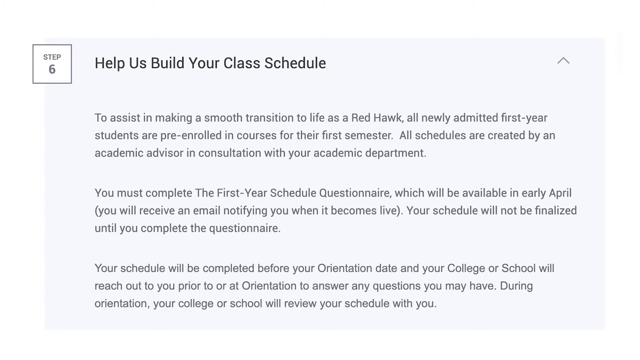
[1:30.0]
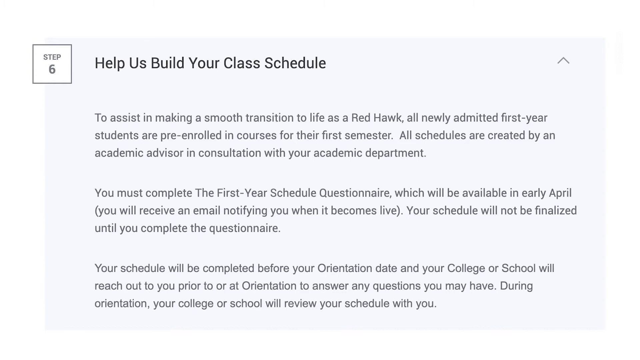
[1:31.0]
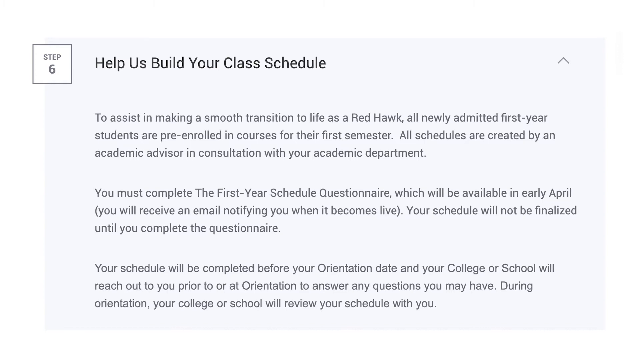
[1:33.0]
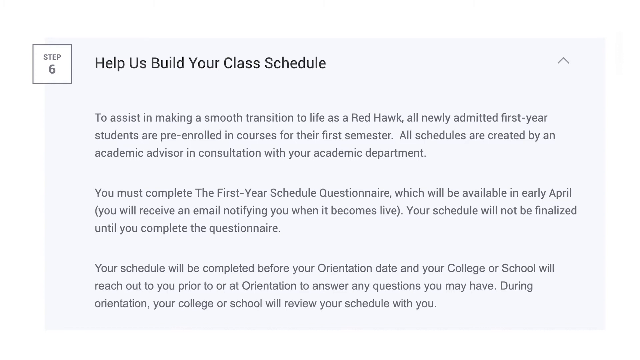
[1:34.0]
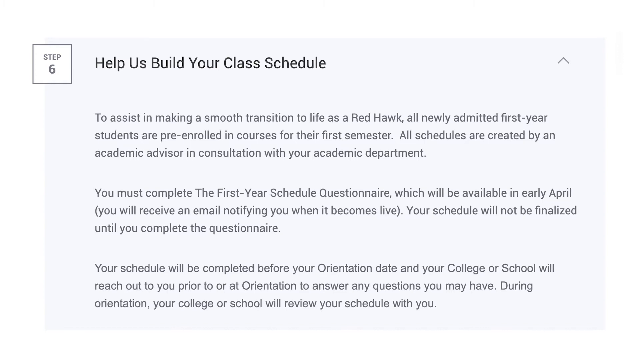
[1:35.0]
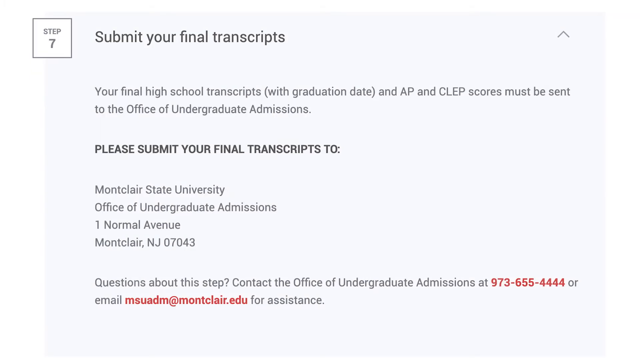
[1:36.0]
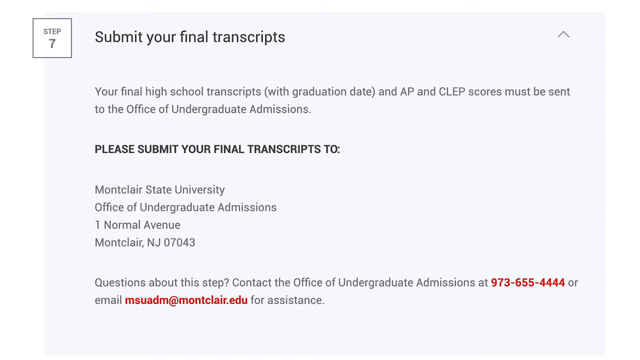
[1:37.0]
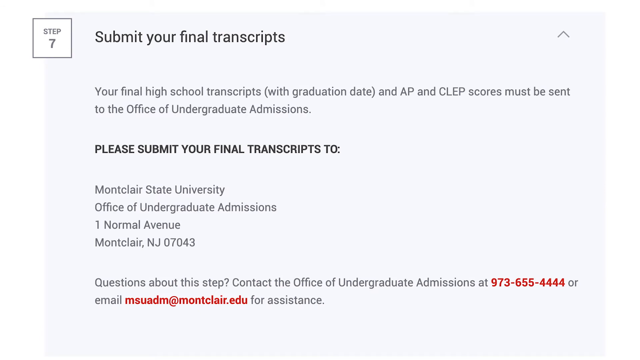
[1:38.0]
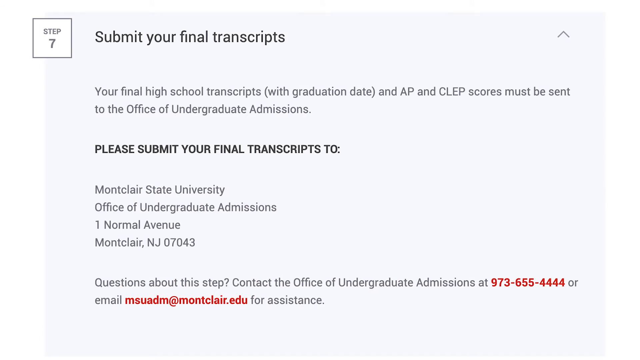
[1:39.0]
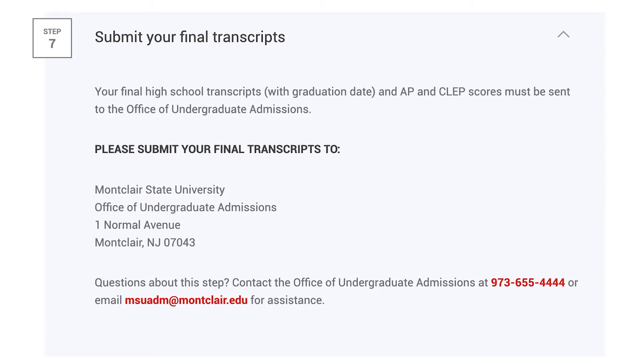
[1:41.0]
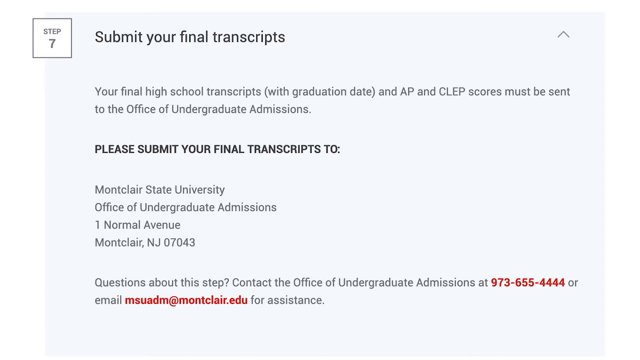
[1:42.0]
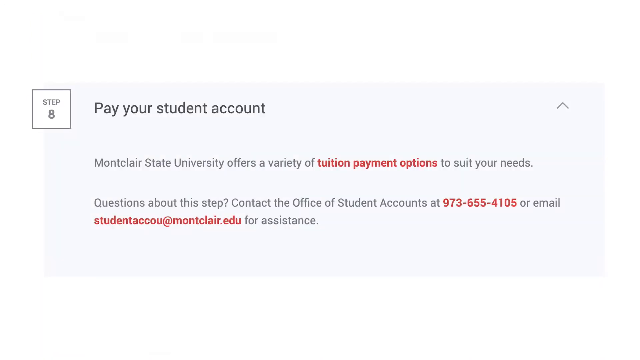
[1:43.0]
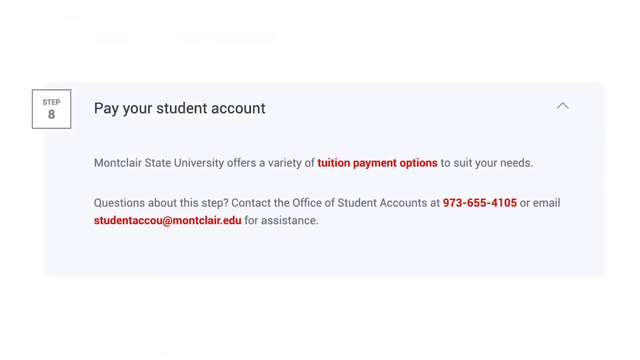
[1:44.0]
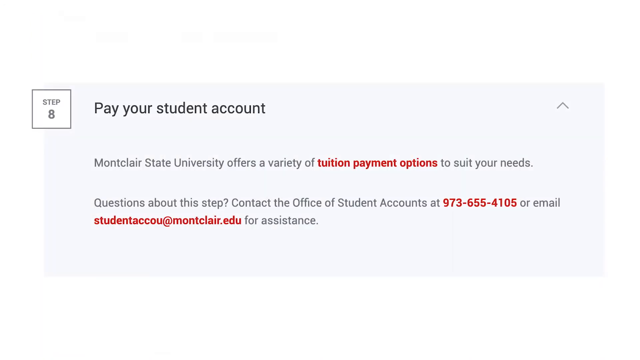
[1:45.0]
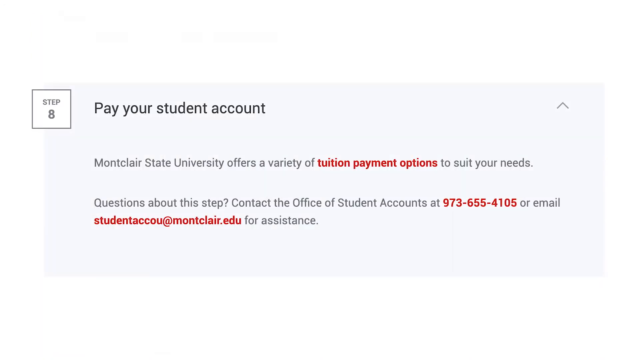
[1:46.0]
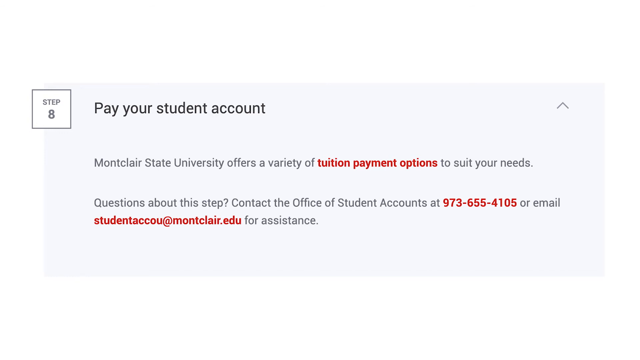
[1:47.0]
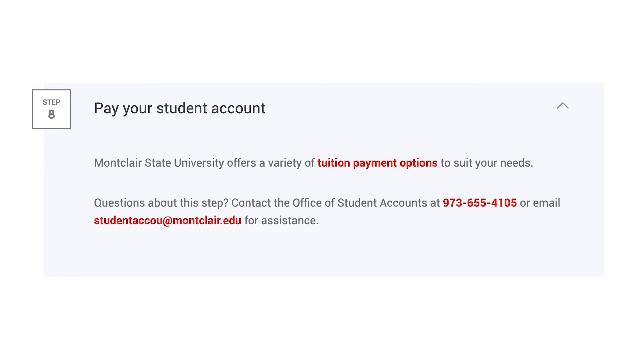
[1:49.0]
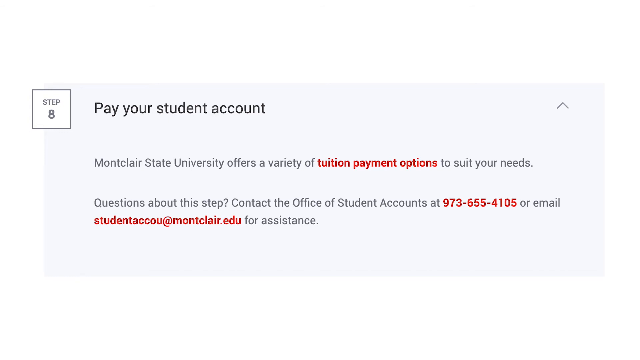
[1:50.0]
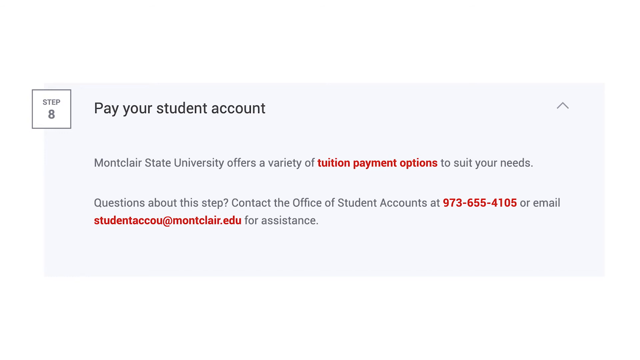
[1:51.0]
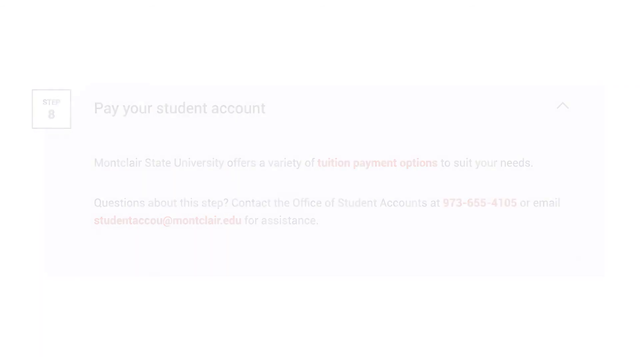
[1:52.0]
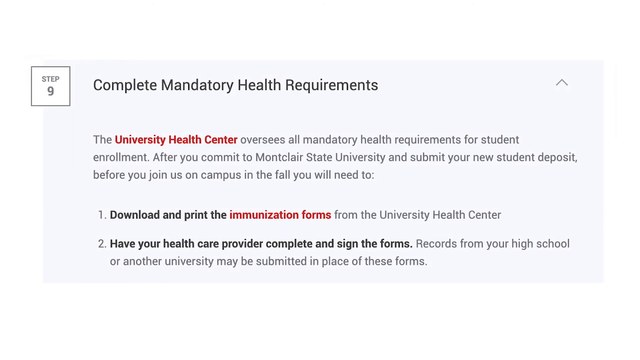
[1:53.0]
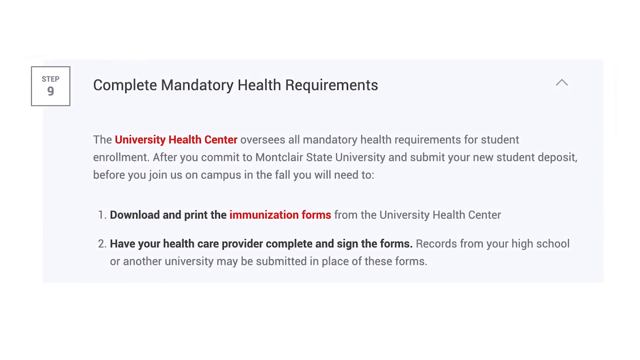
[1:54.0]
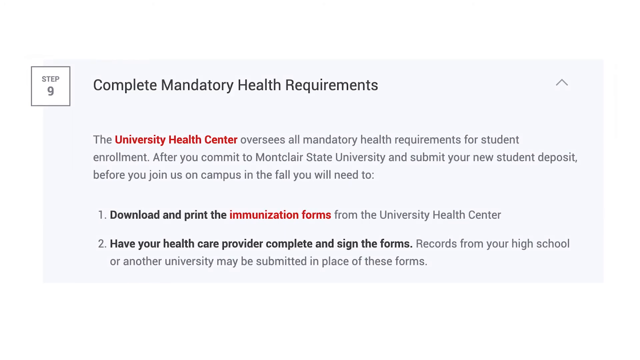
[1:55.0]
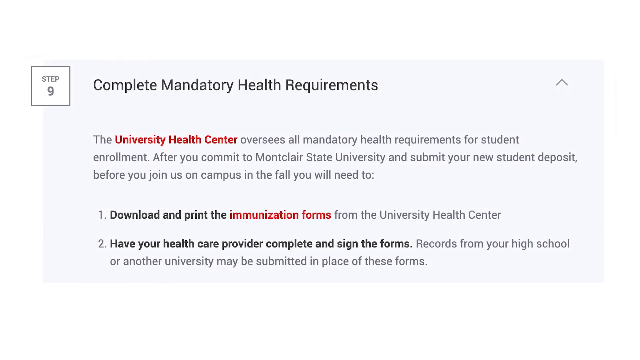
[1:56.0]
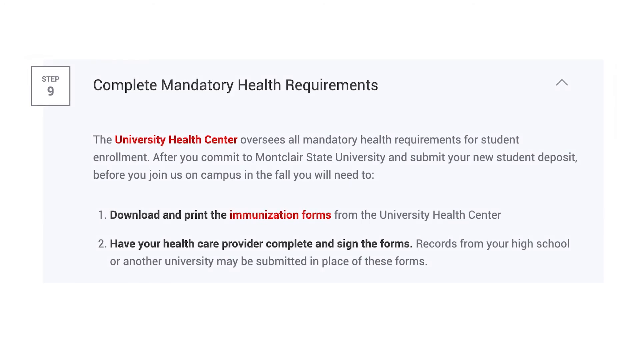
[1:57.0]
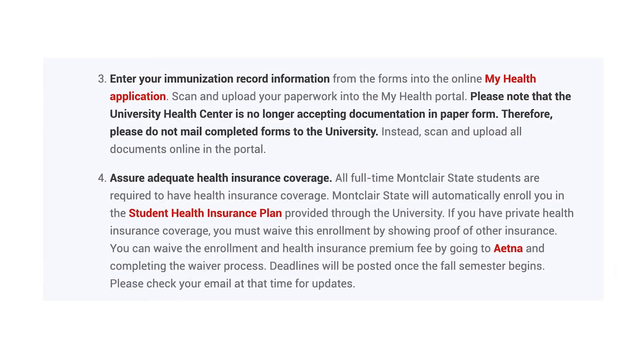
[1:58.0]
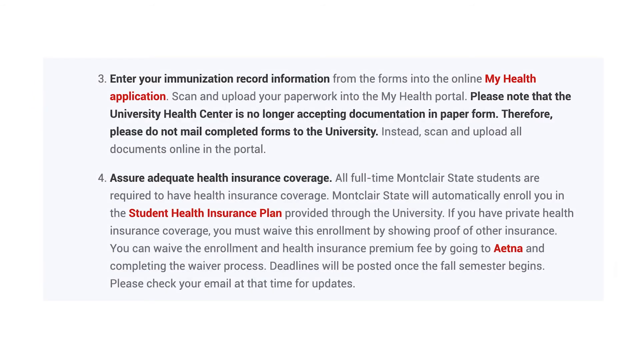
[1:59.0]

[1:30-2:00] Step 7 reminds students to send their final high school transcripts to the Office of Undergraduate Admissions, and the full mailing address is shown. Step 8 is about paying tuition, with different payment plans offered; a phone number and email address for the Office of Student Accounts are provided. Step 9 focuses on health requirements, saying that students must download and complete immunisation forms with help from their doctor and then upload them to the My Health portal online. It also covers that full-time students must have health insurance, with information on enrolling in the university's plan or showing proof of coverage.